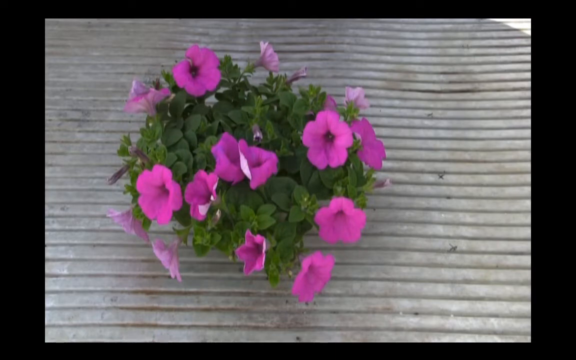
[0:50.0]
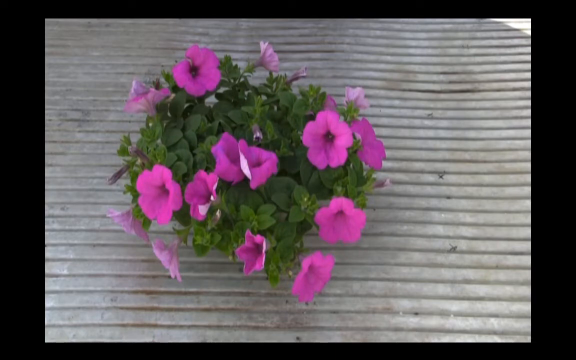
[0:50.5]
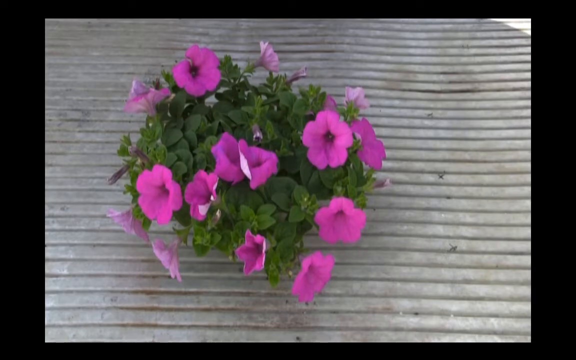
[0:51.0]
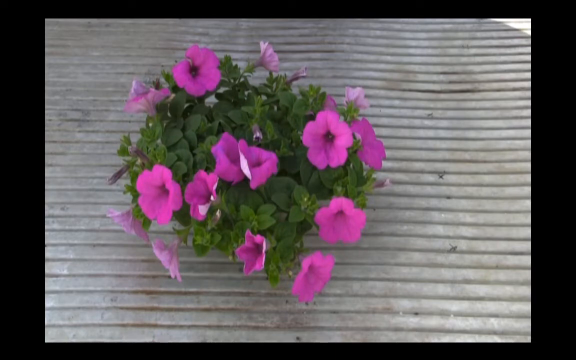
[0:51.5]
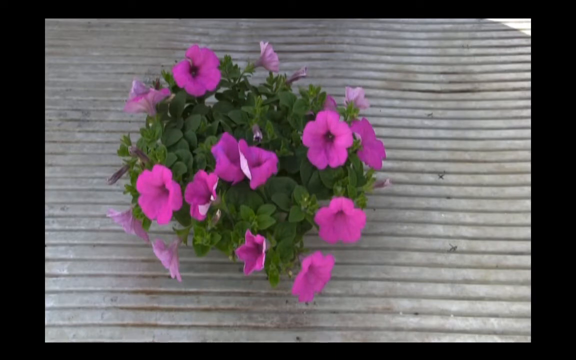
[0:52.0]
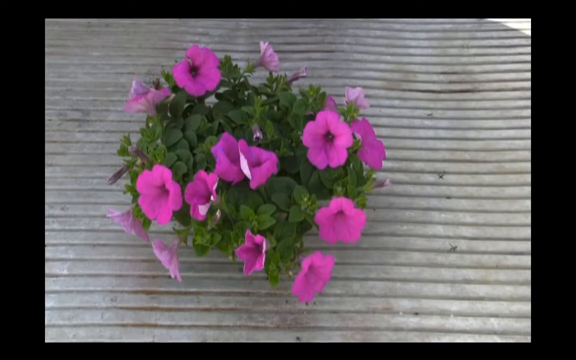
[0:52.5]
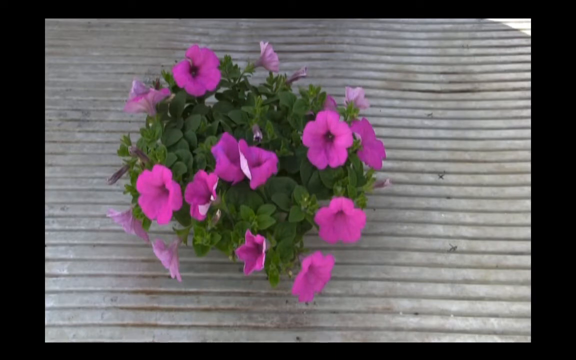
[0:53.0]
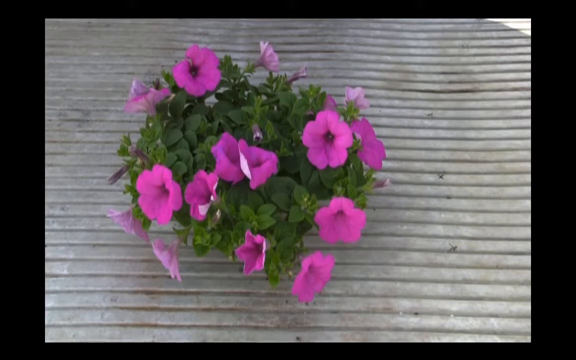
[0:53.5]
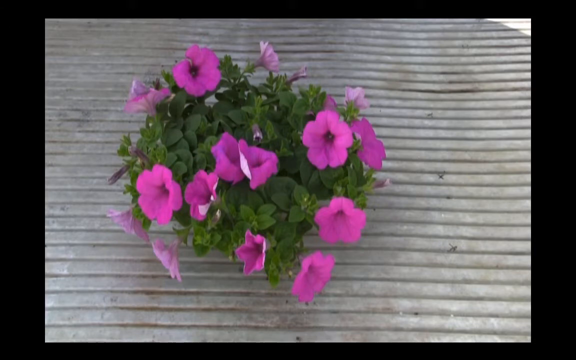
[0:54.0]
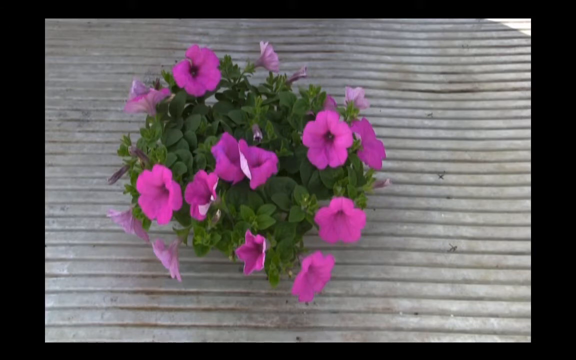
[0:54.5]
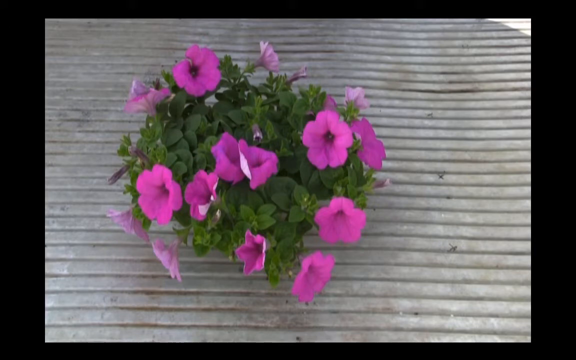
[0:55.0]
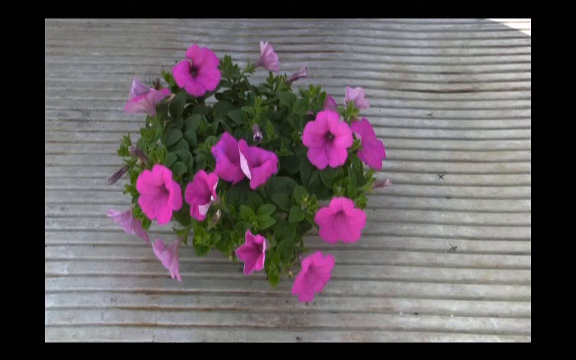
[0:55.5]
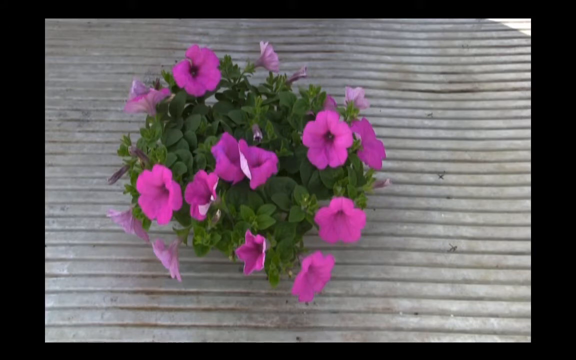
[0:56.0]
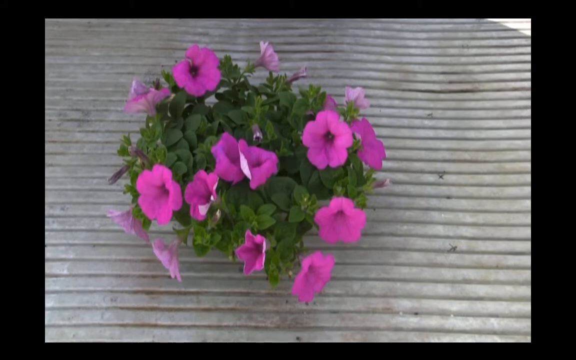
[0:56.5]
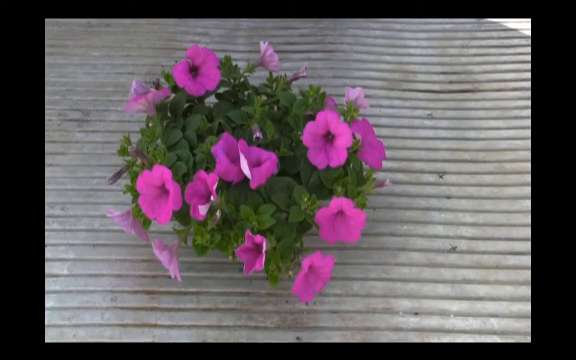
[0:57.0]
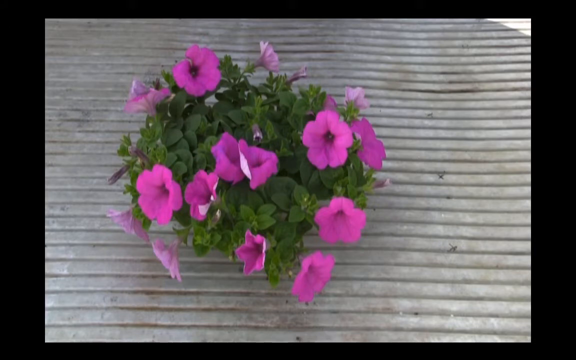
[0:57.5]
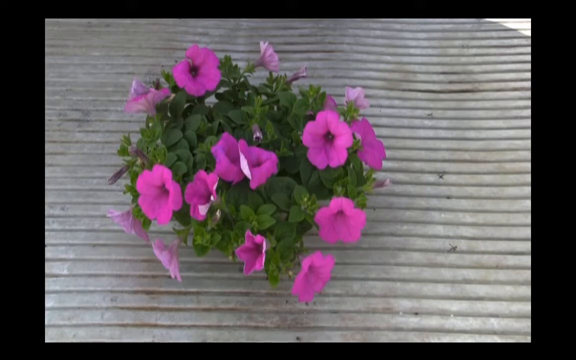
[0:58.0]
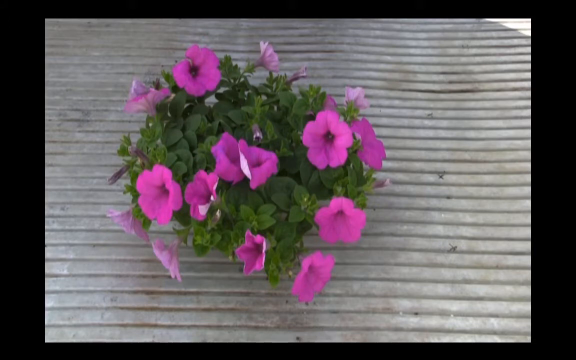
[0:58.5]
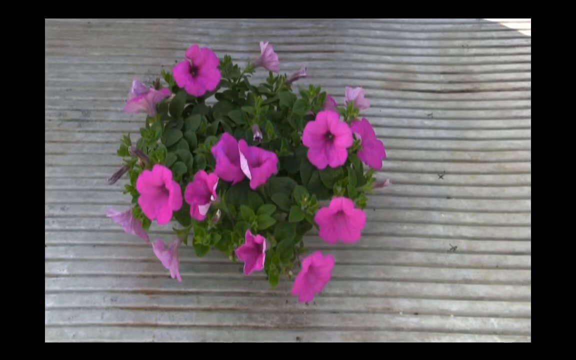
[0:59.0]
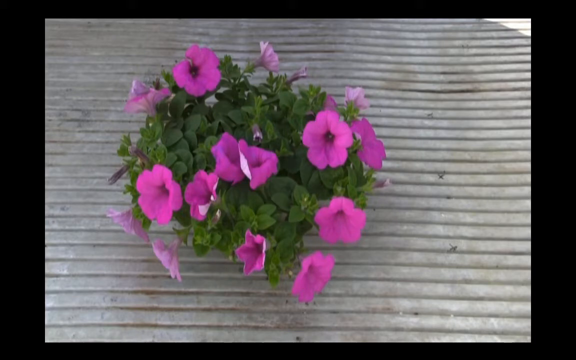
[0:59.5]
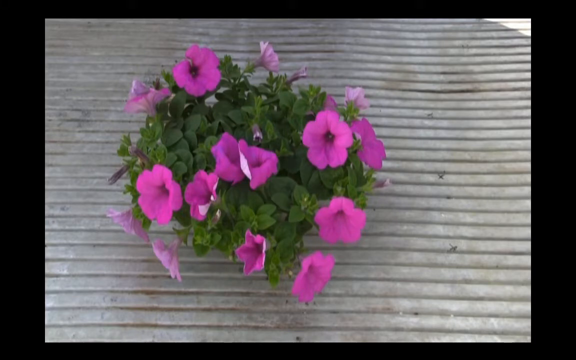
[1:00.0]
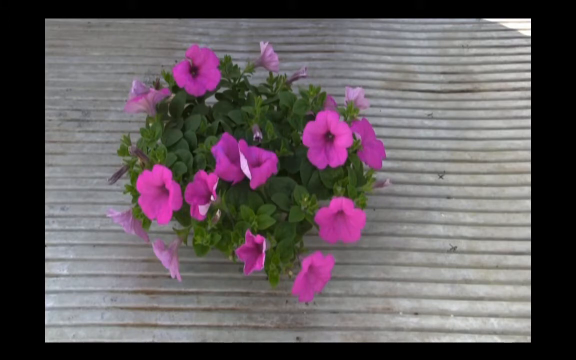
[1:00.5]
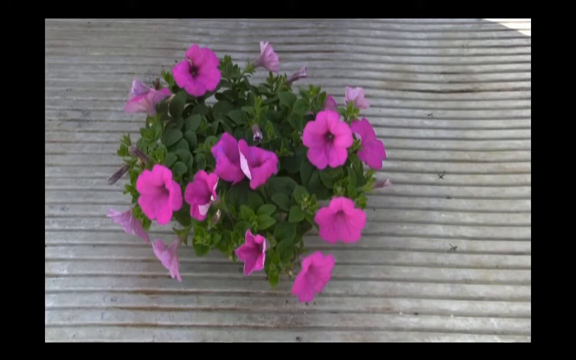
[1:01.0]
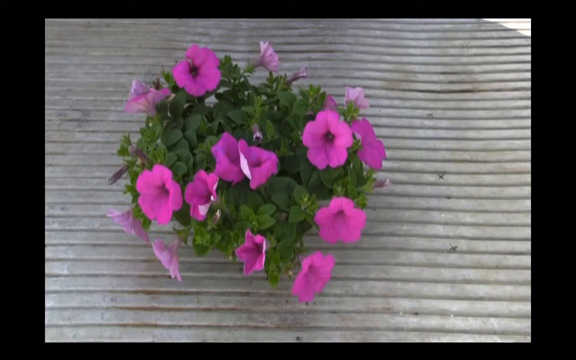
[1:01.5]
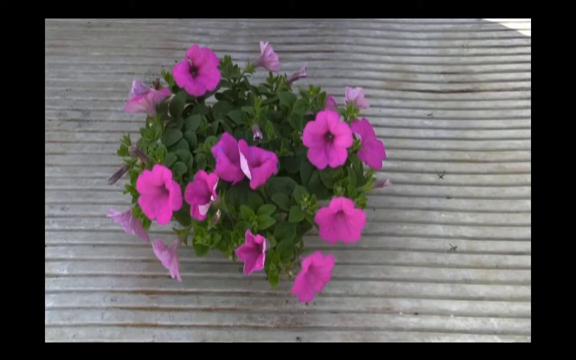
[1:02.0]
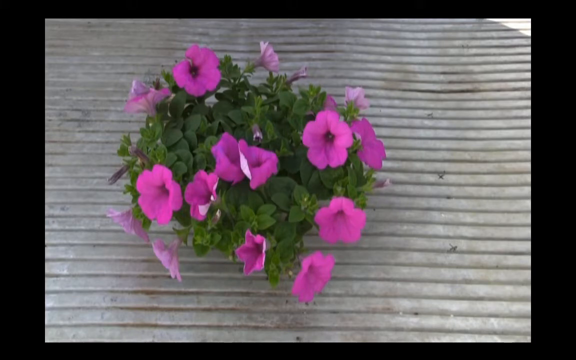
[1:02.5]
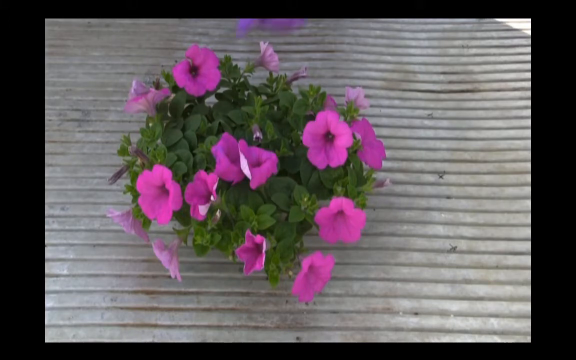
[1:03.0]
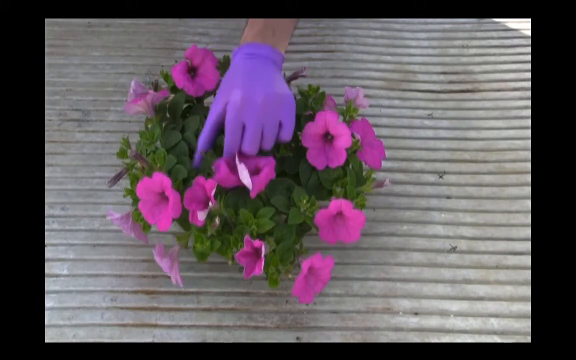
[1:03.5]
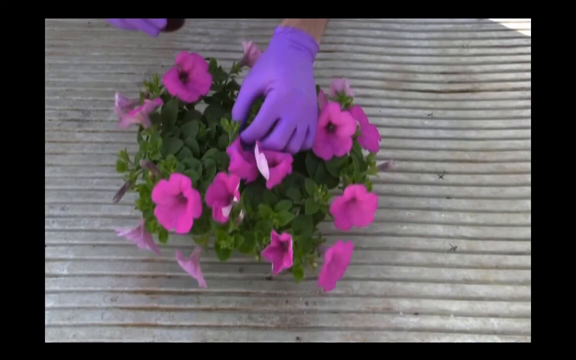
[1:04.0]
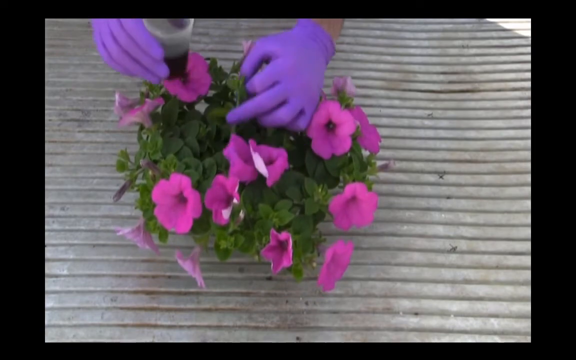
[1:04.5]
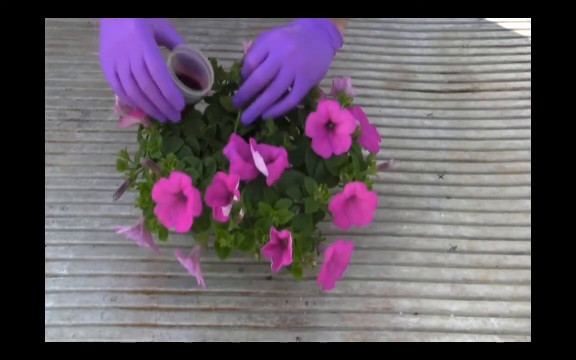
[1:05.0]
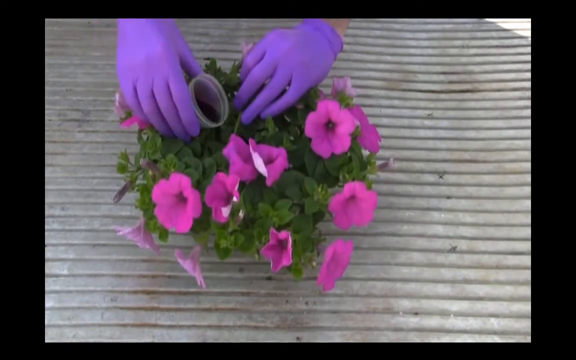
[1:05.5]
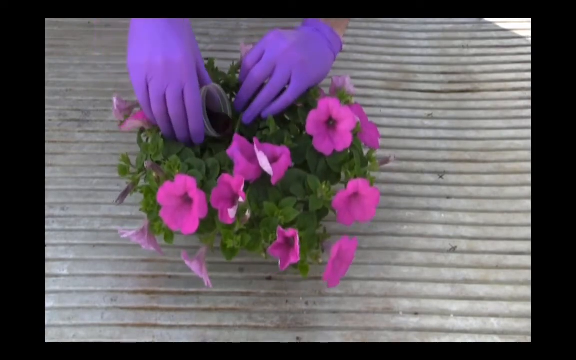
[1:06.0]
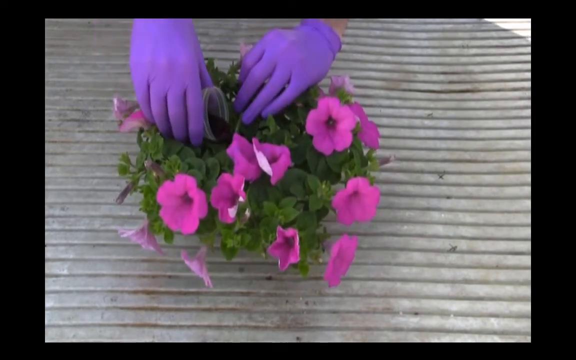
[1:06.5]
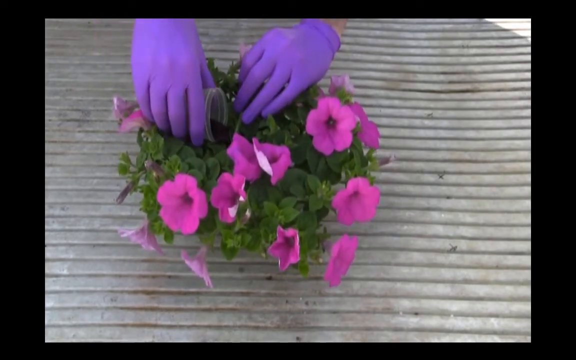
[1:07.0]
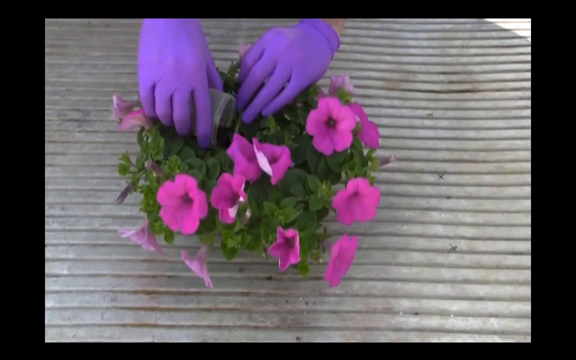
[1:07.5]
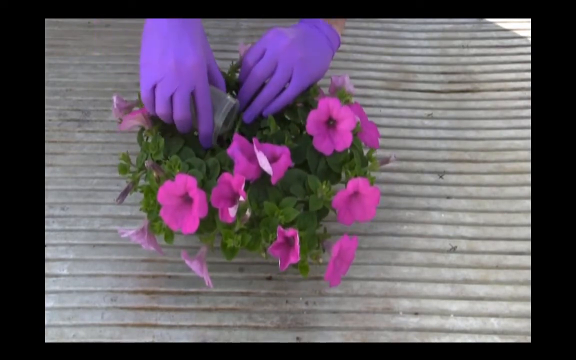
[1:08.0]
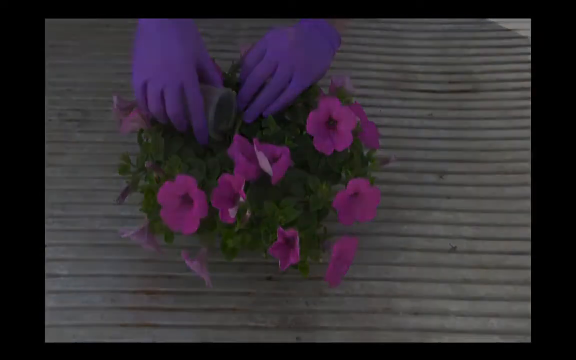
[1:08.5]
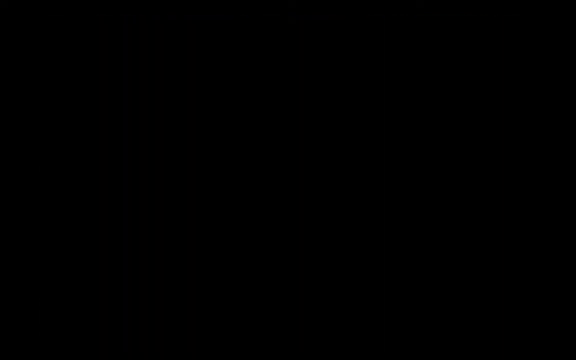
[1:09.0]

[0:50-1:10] A green plant sits on top of corrugated iron. Most of its leaves are green, and about 10 to 15 leaves are purple. Someone wearing purple gloves holds the plant and opens it with their right hand, while their left hand holds a transparent cup containing a solution that looks blackish, like Coca-Cola colour. They slowly pour the mixture into the plant and then remove the cup.